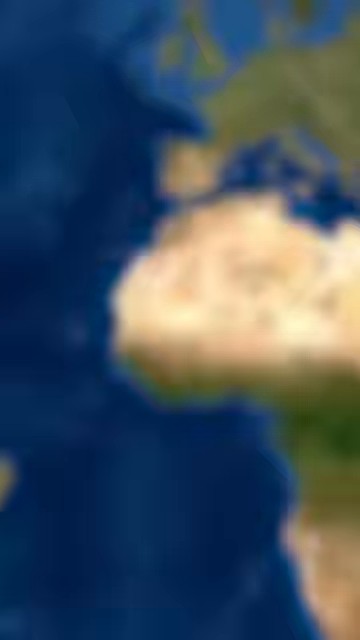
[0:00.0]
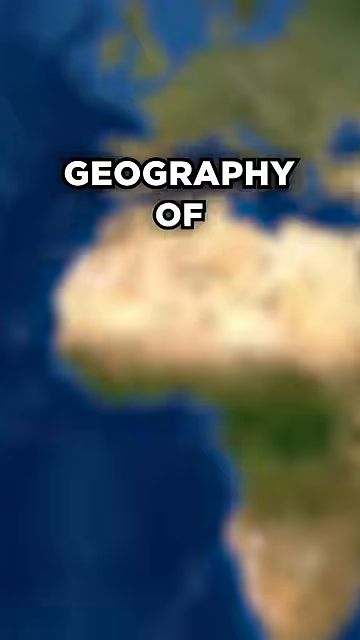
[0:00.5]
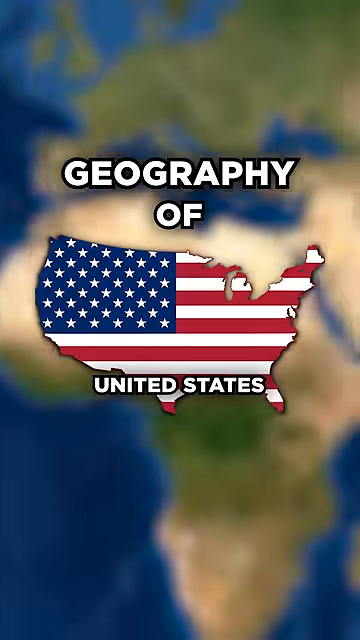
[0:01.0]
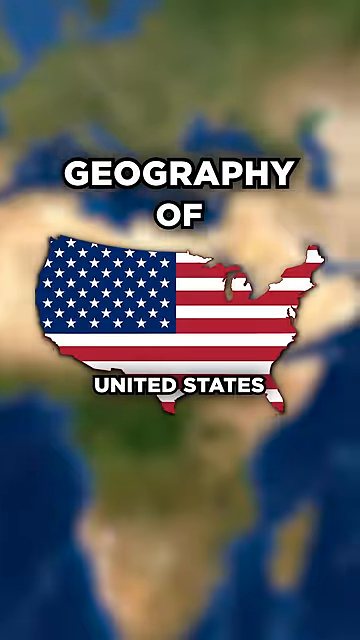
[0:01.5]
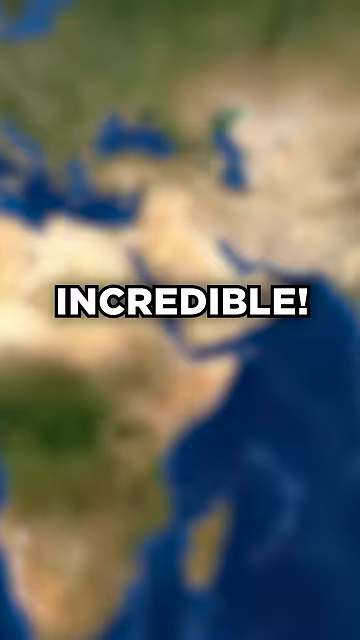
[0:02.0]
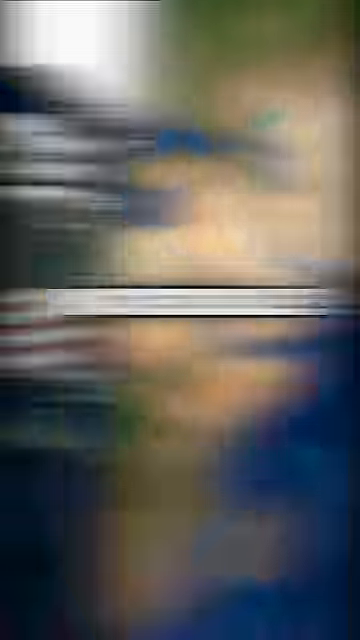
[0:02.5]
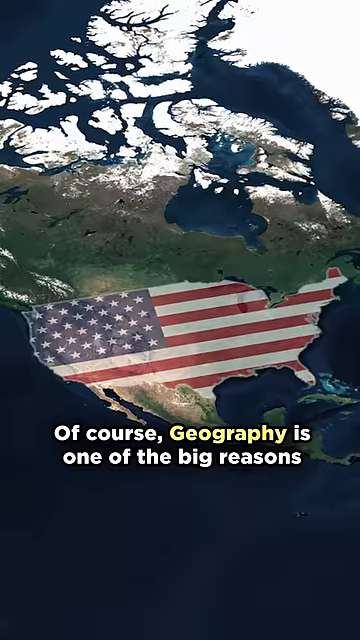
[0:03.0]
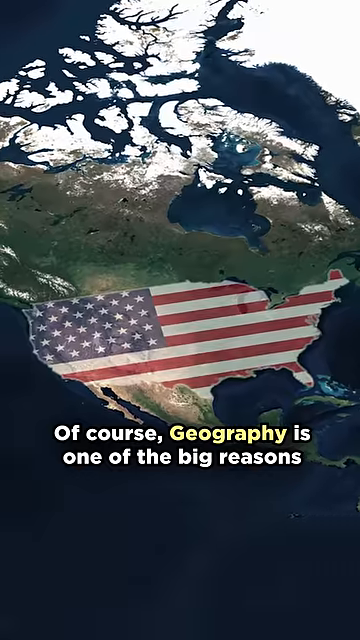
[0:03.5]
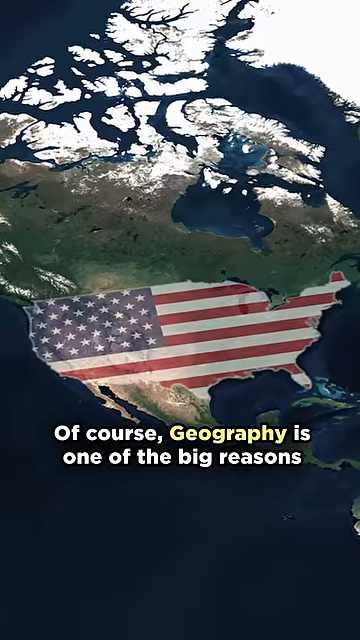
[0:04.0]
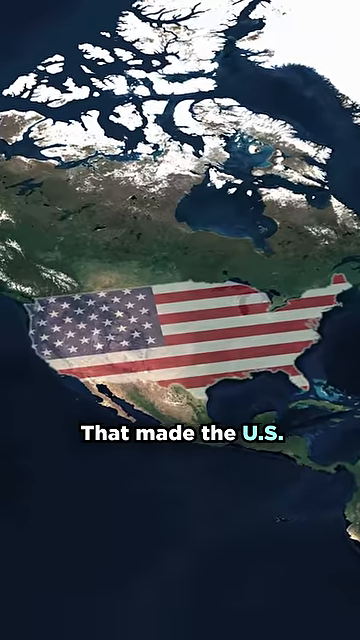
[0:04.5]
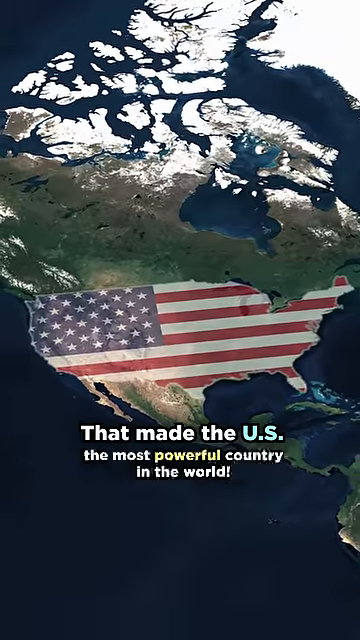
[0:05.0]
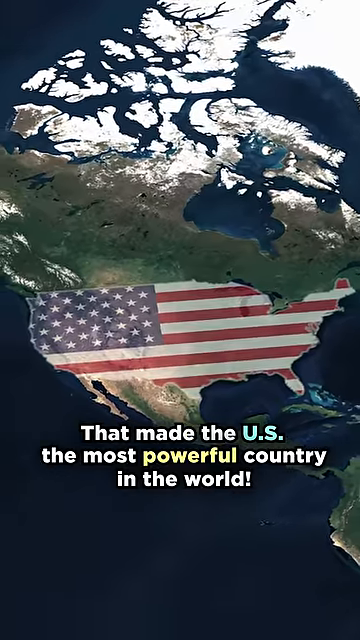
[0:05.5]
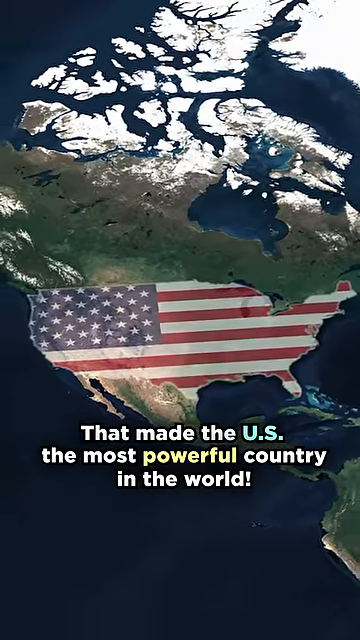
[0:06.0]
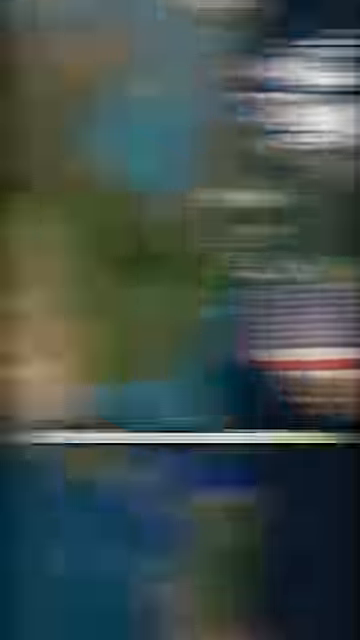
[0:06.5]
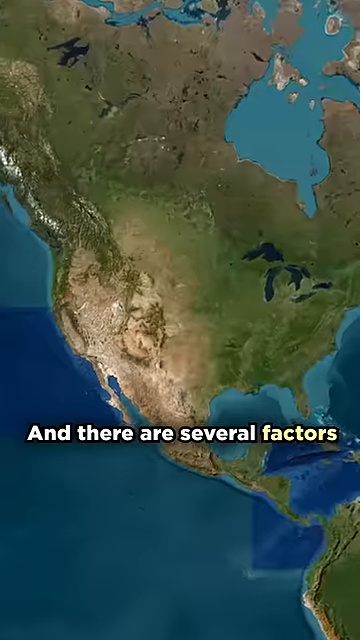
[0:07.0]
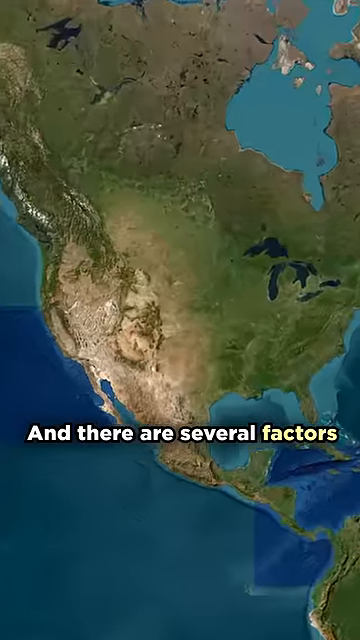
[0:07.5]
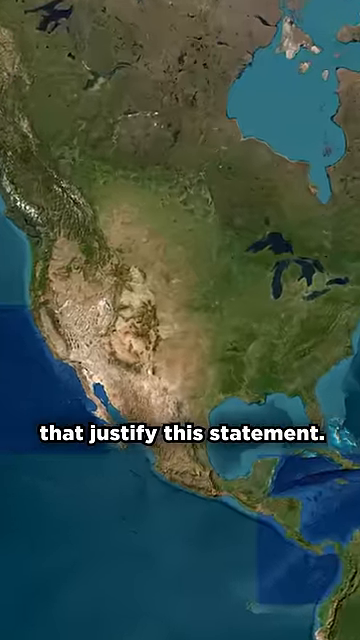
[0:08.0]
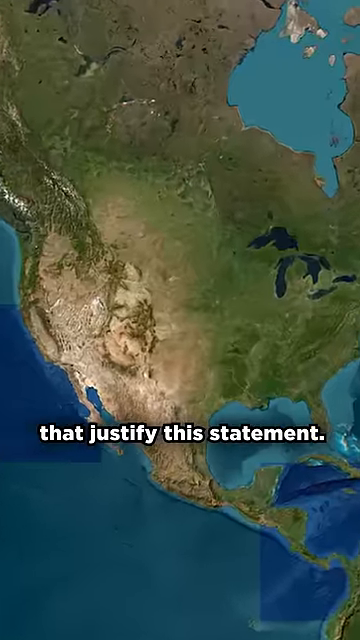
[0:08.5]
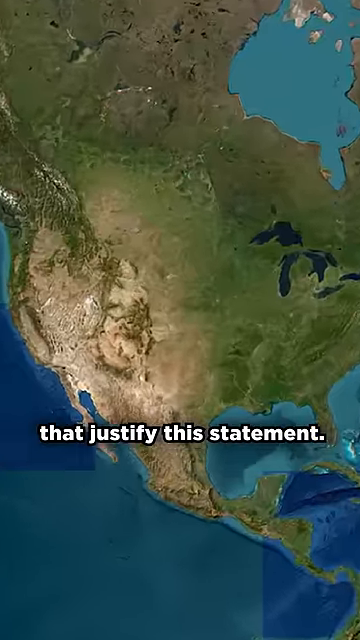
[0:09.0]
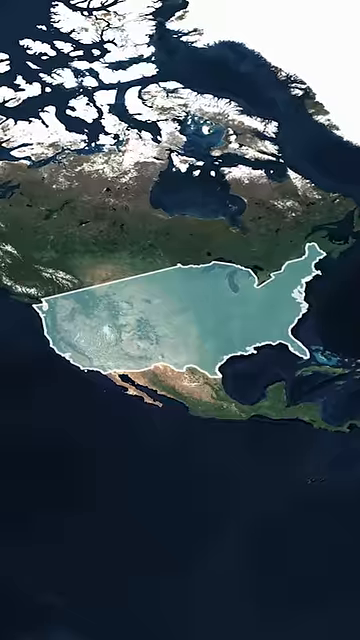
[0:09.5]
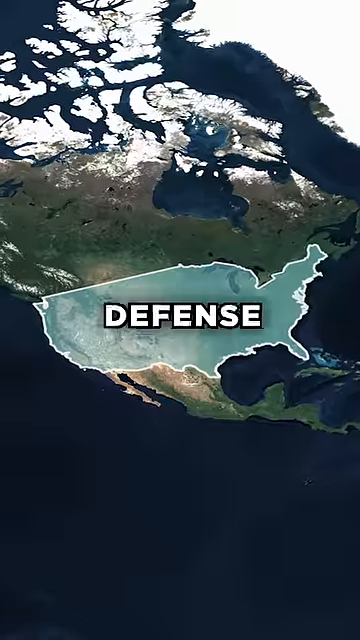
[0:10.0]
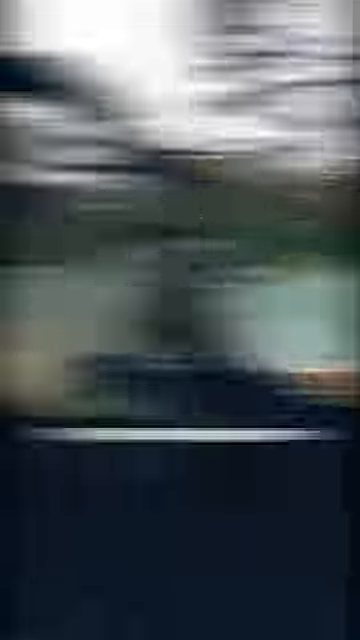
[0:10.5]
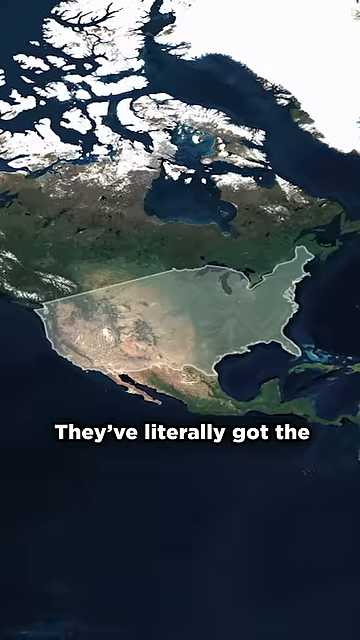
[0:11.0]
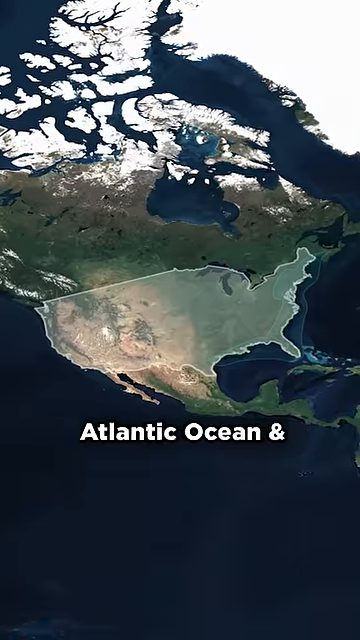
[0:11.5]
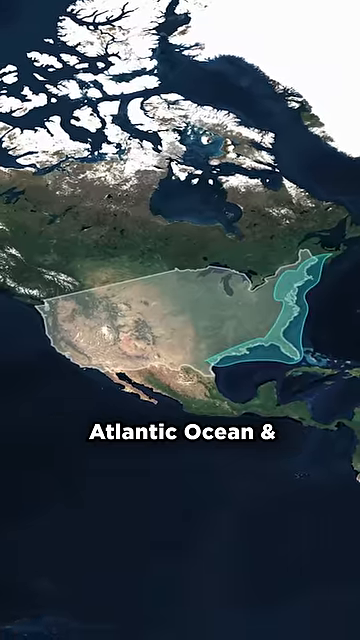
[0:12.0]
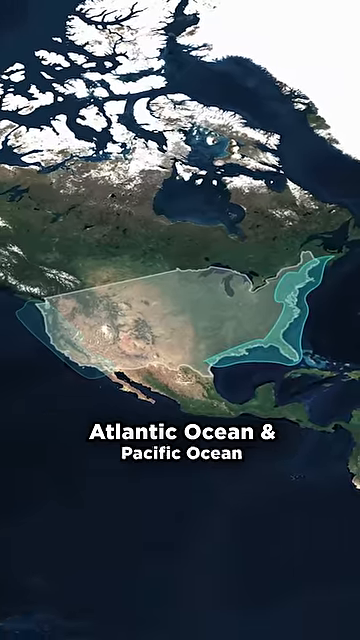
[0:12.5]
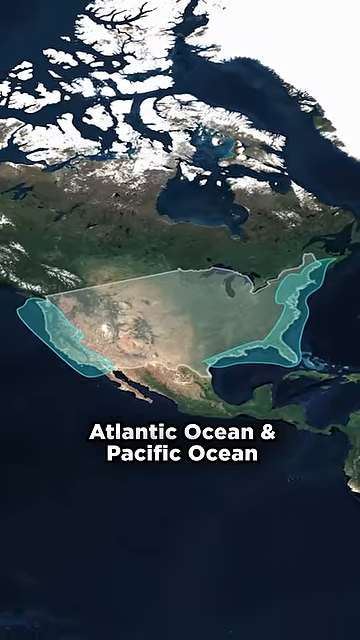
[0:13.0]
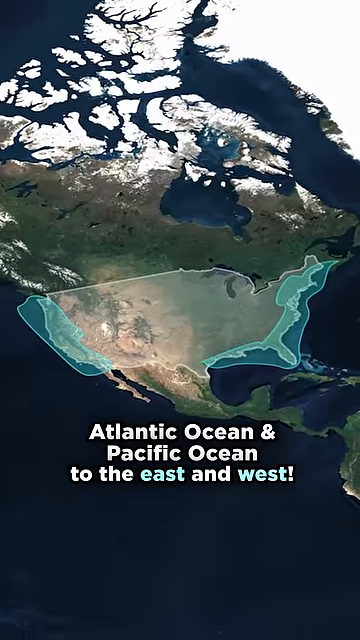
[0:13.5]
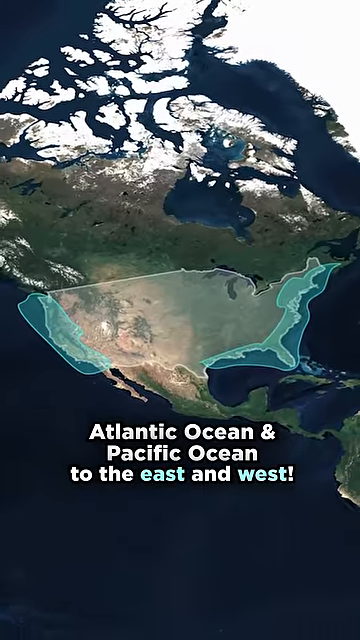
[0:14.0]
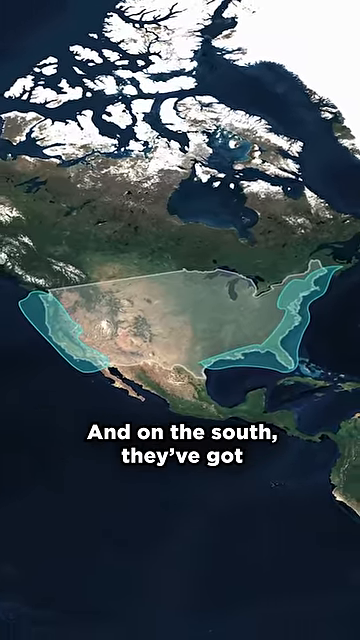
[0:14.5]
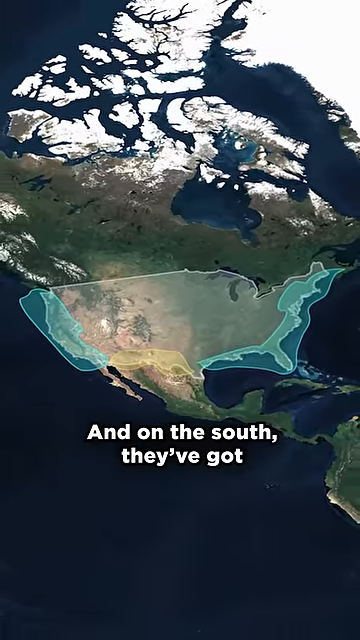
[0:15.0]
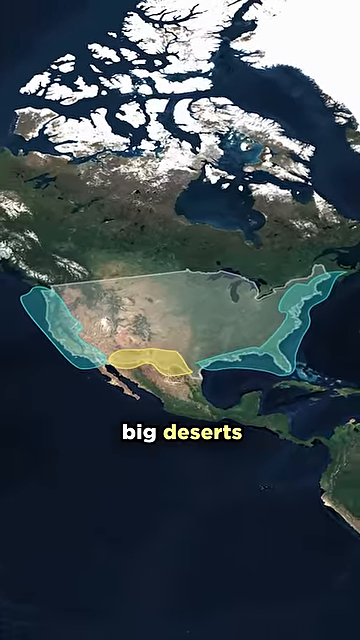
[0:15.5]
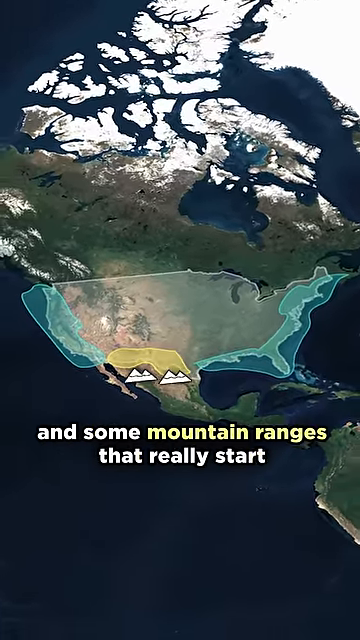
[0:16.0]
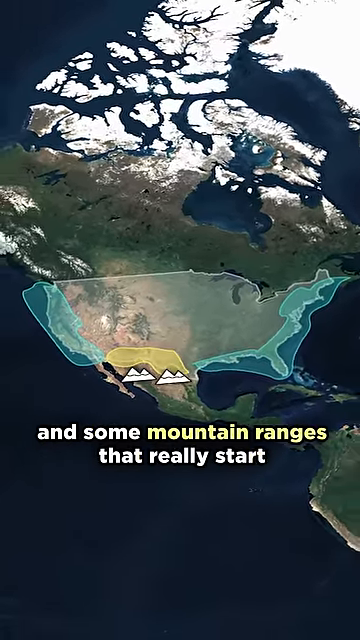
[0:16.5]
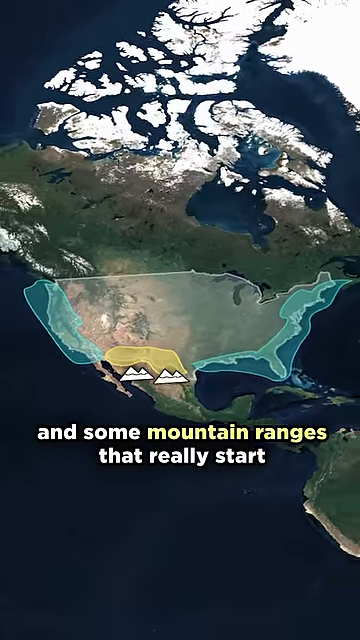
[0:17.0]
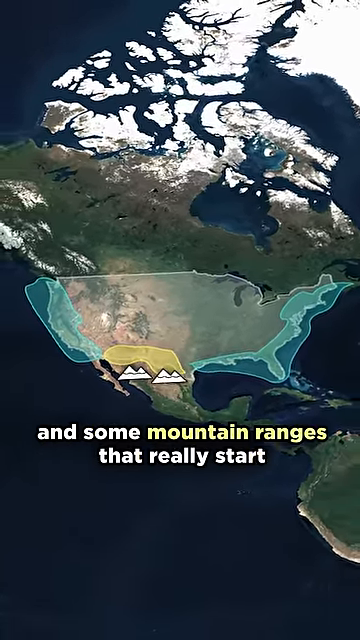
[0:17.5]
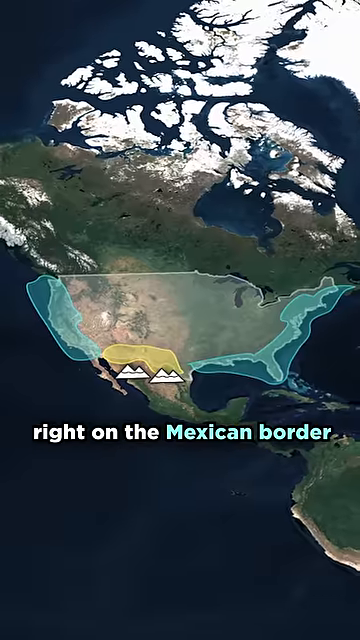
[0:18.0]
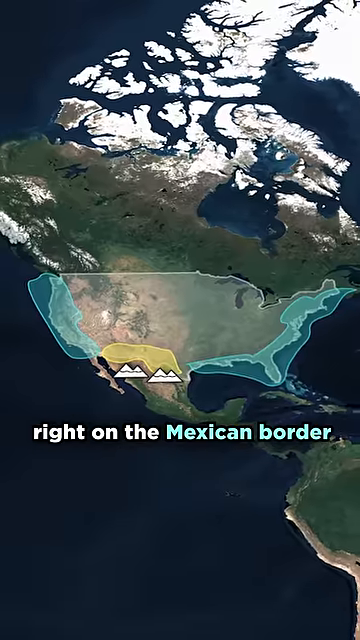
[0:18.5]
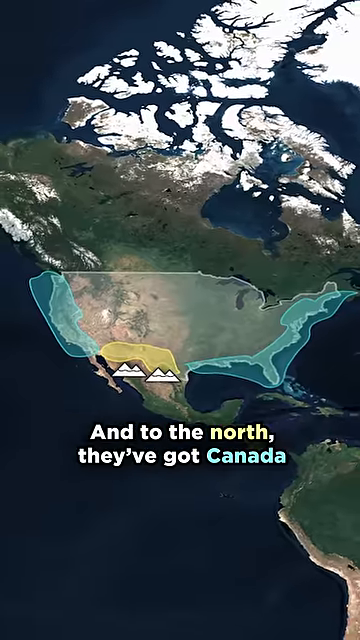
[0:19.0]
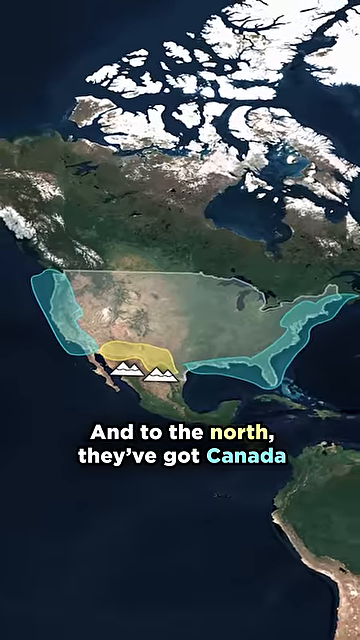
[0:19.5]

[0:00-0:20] This typography explainer shows a map of the United States and focuses entirely on the physical outline of the country. Narrated text in white runs across the bottom of the scene, appearing on top of the ocean. An American flag is placed on top of the outline of the map. A Canadian flag also appears above the outline of Canada, above the map of the United States.